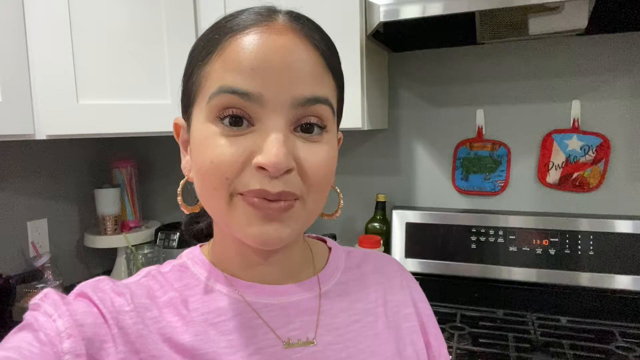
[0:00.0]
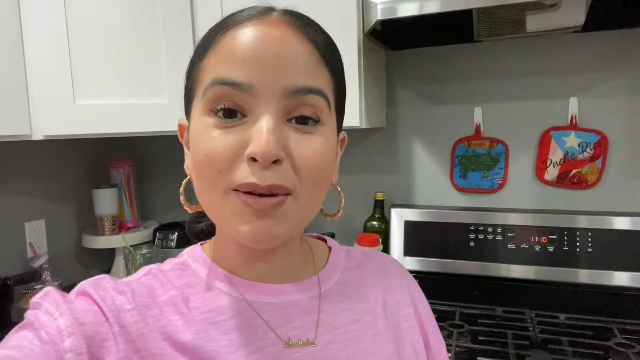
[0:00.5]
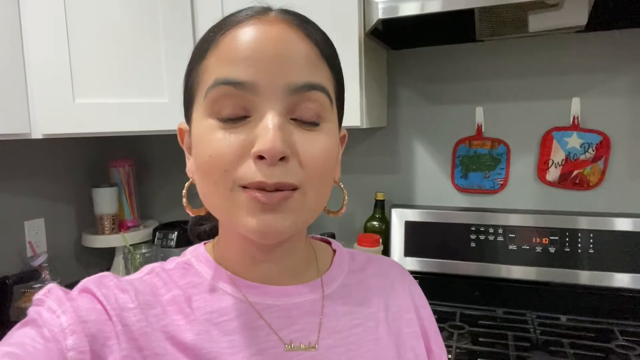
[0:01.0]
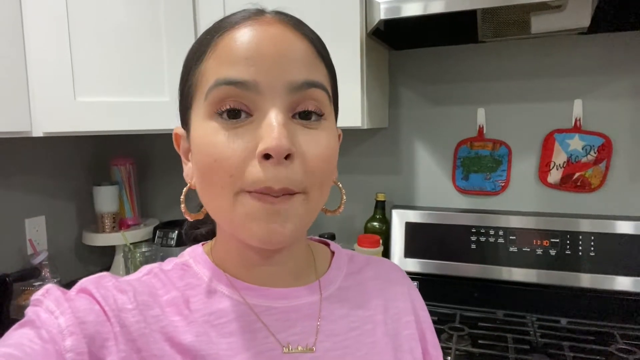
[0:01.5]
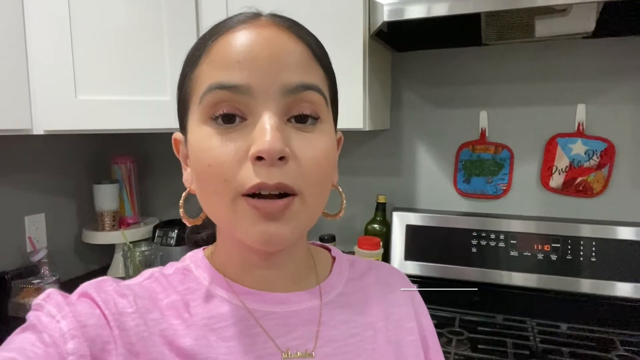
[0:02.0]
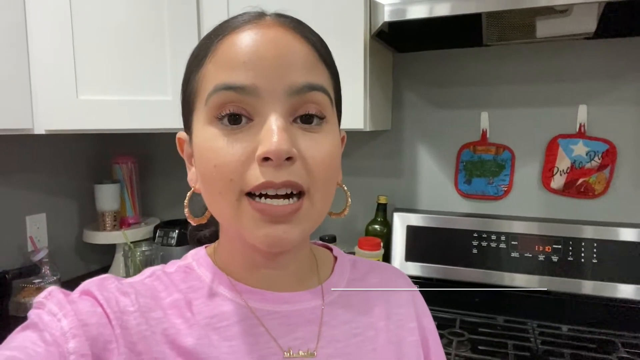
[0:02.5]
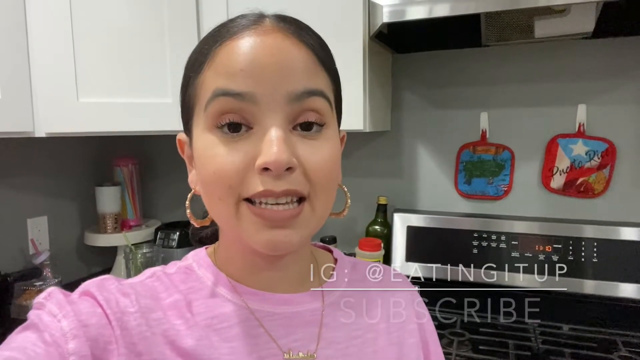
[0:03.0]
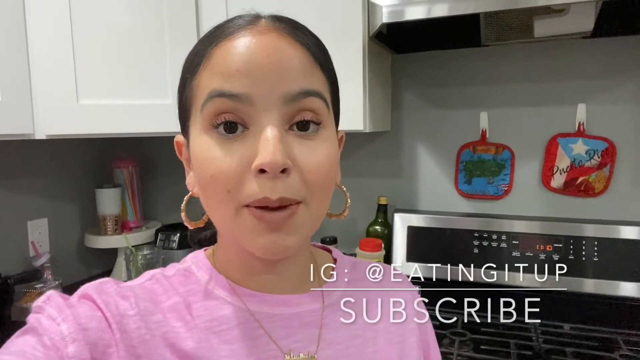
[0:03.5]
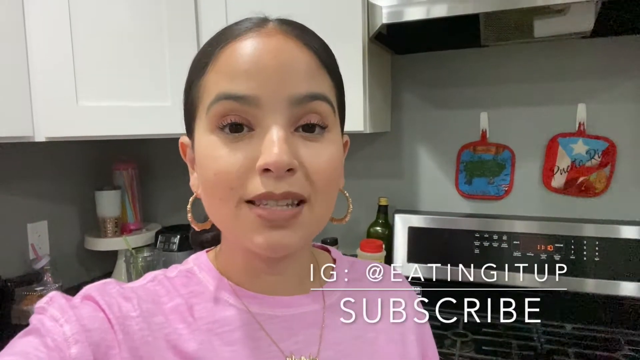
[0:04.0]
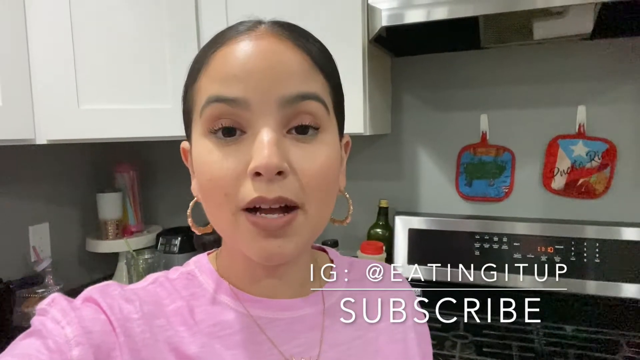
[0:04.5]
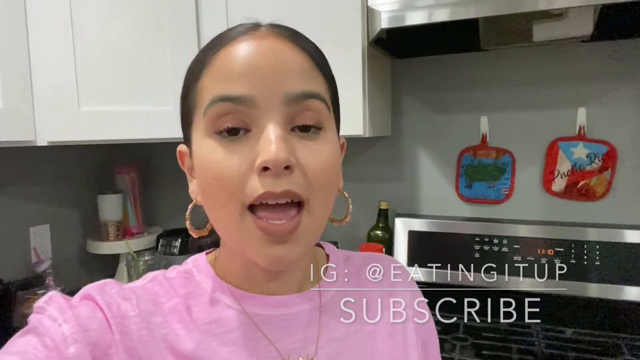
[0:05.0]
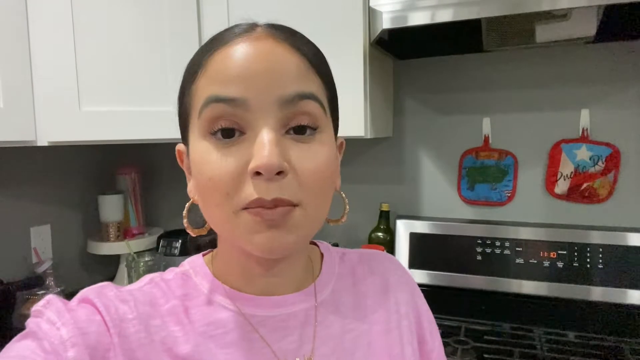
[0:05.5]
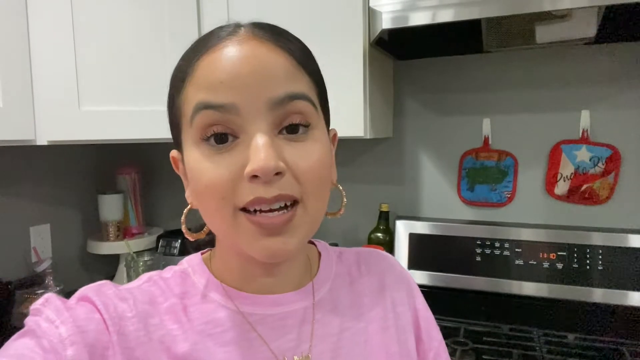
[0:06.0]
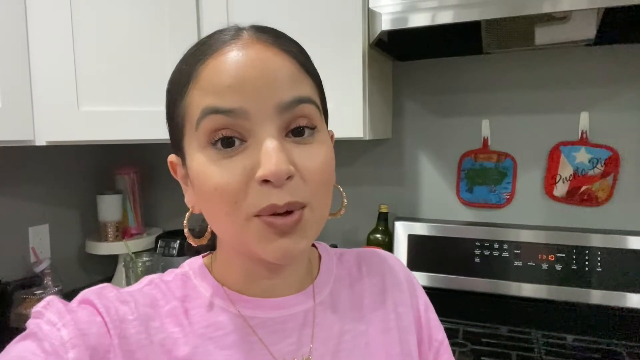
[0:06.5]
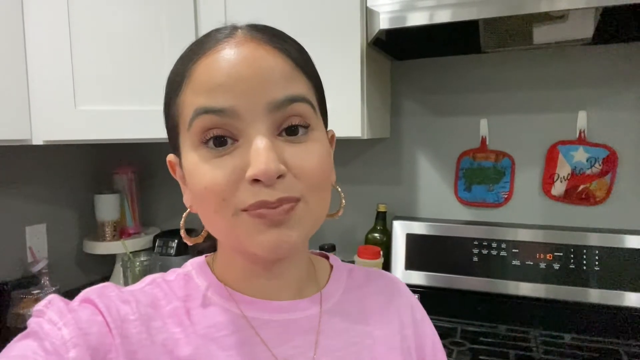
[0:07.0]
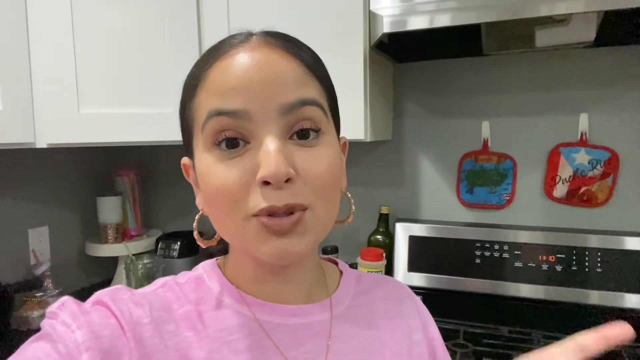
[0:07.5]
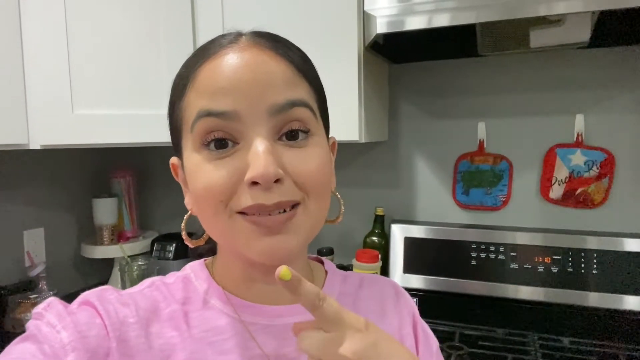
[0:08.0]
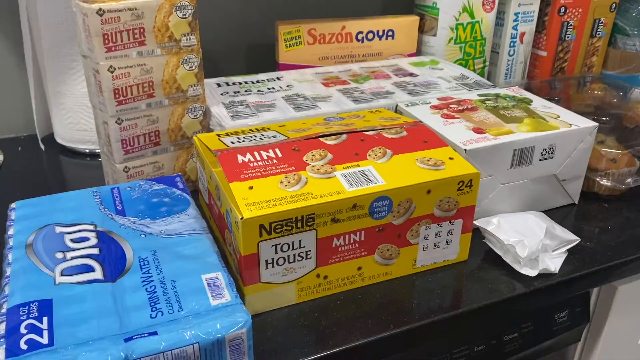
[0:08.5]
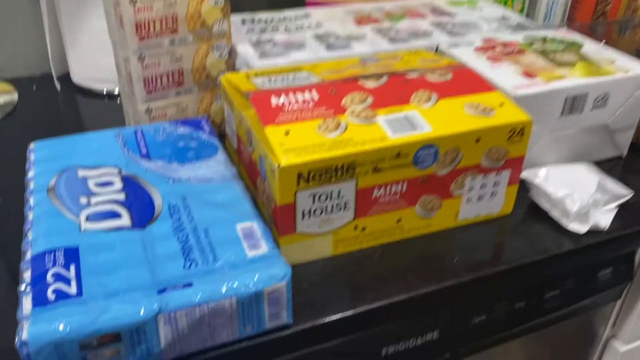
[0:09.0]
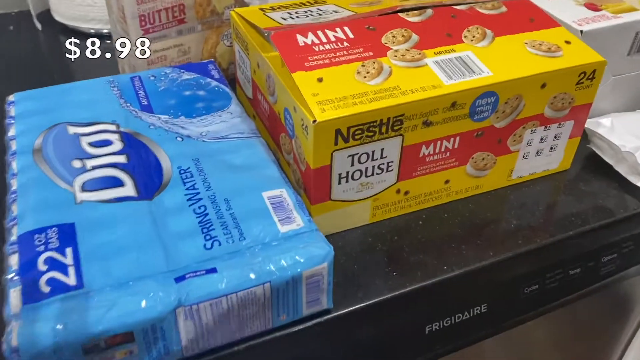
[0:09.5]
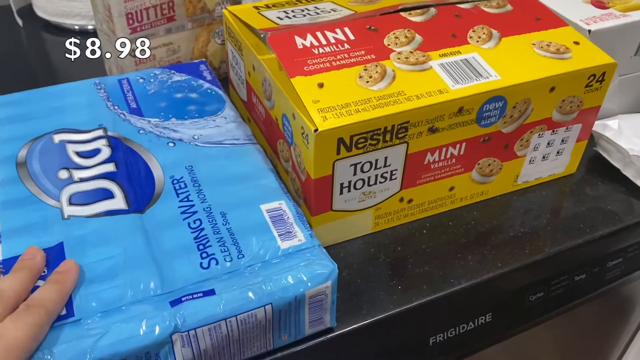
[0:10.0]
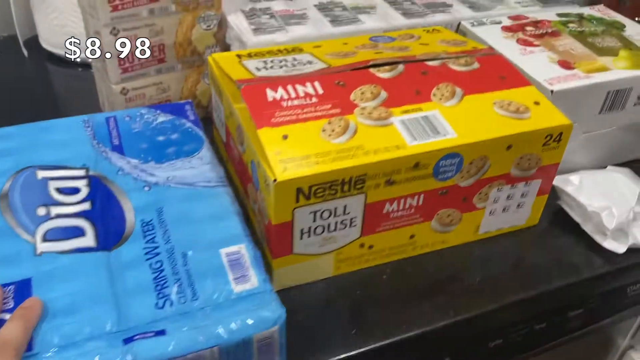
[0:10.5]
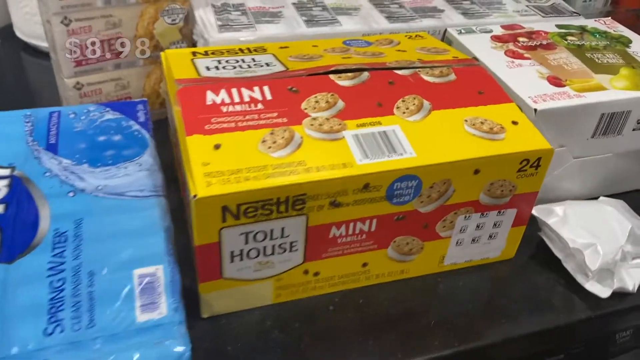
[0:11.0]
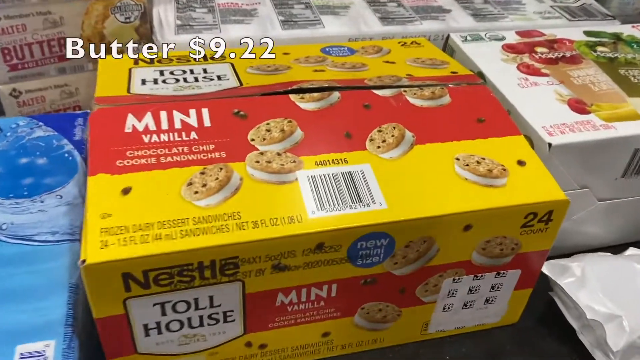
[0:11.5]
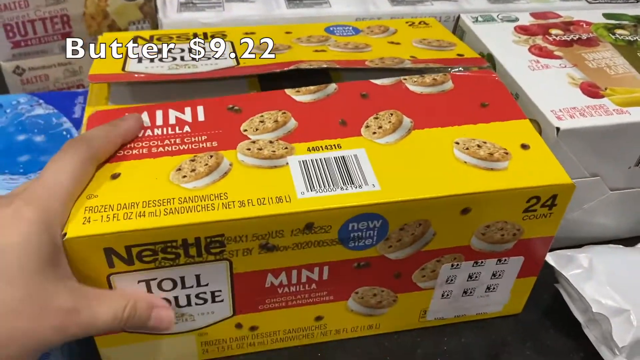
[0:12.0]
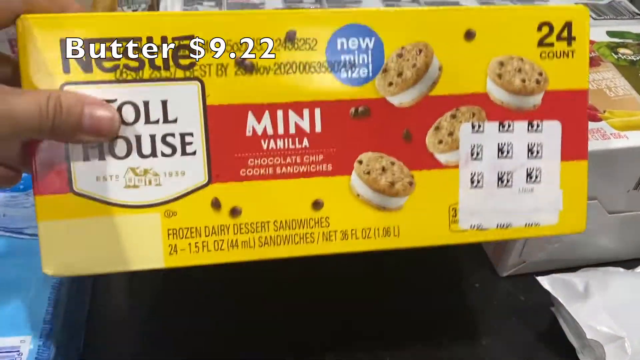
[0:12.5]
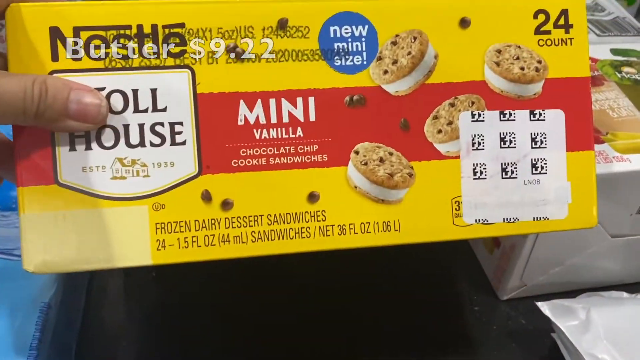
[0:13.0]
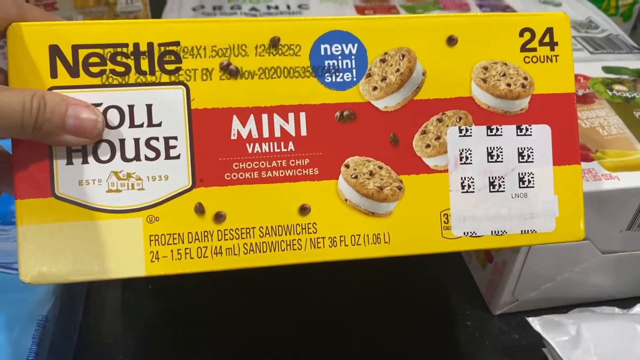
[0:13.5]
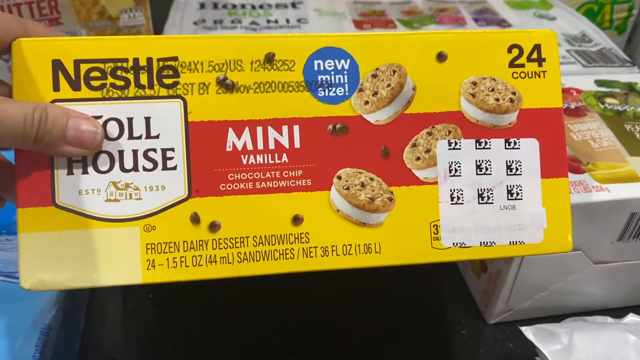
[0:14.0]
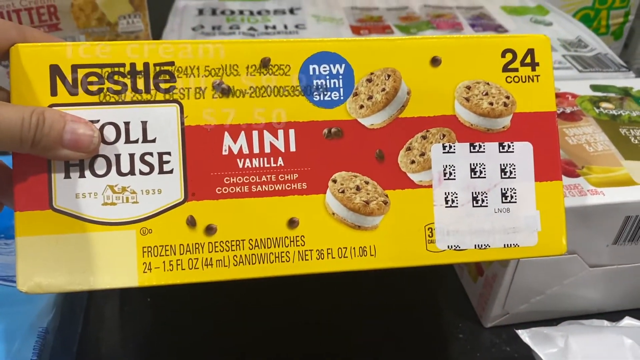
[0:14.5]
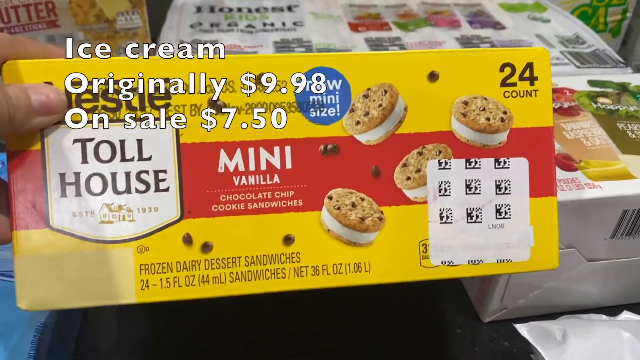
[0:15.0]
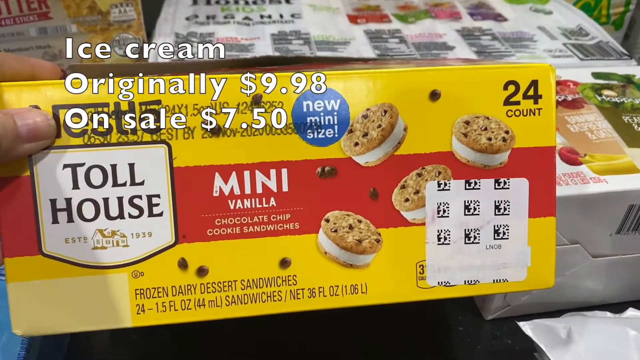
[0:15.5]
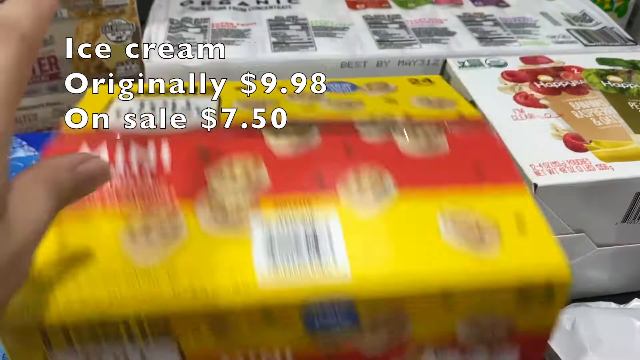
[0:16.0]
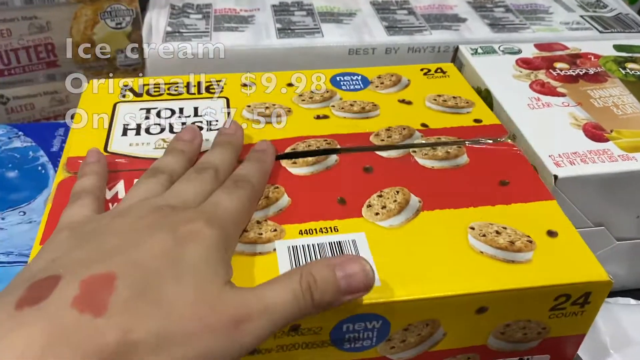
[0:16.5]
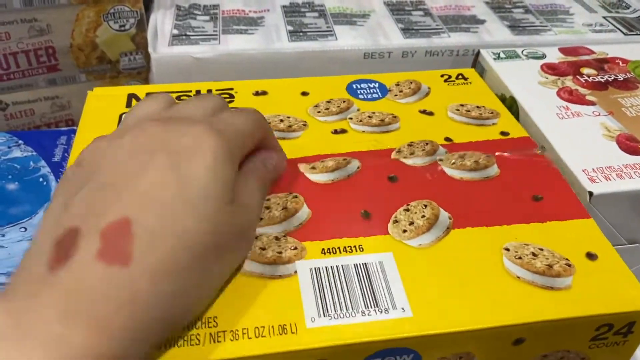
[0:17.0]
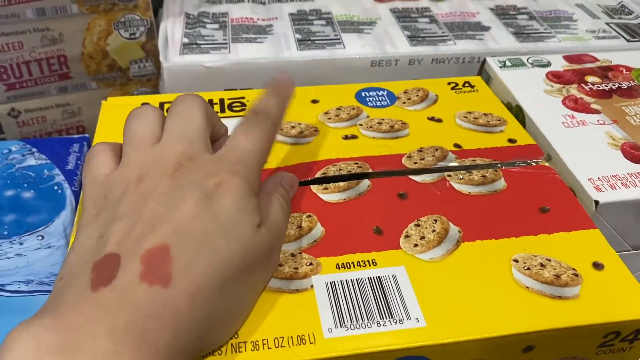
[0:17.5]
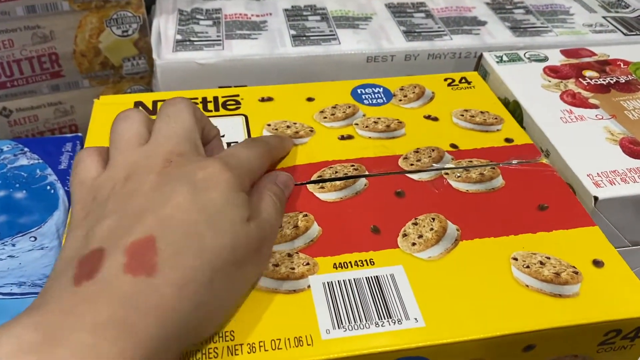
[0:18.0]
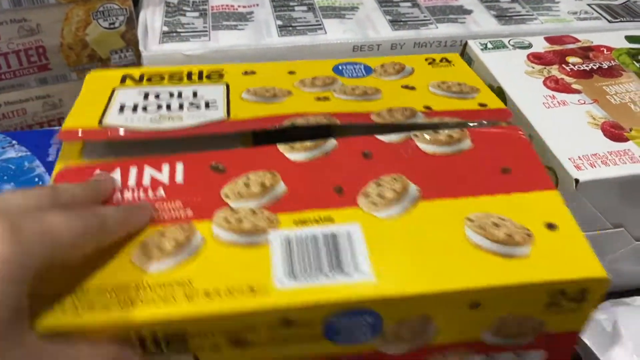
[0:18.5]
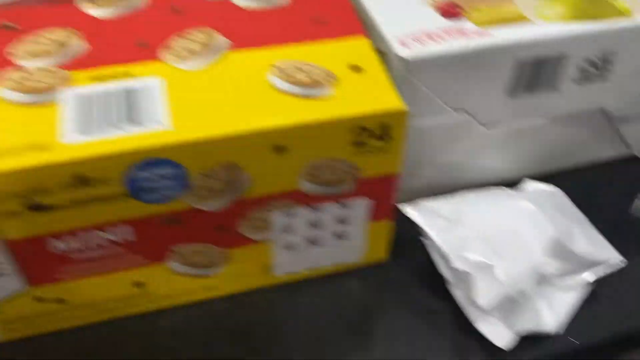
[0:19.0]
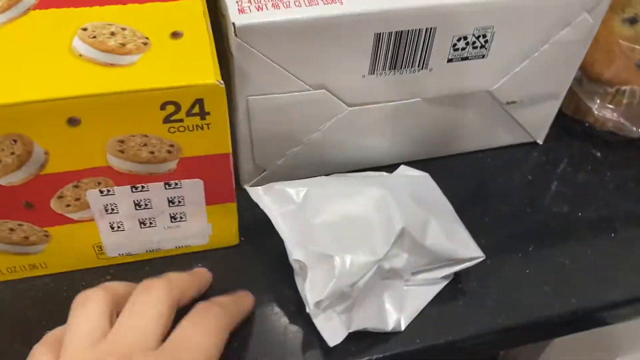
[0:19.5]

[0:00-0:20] A close-up shows a woman in a kitchen wearing a pink shirt. She is standing with the camera in a selfie pose, and an oven is visible on the right side. She looks directly into the camera as she begins to speak, and an Instagram tag for "eating it up" appears along with text that says "subscribe." She continues to speak and look at the camera while gesturing with her left shoulder in a sort of shrug. Her left hand then comes into view with the index finger pointing up toward the top left side of the screen. The video then cuts to a counter area holding various items such as butter and soap, as well as what appears to be some sort of mini ice cream cookies. She places her left hand on top of the soap on the left side of the screen, and a price of $8.98 appears above the soap. The butter is shown next, with a price of $9.22. She then picks up the Toll House mini vanilla chocolate chip cookie sandwiches with her left hand and holds the box to show its front and labeling.